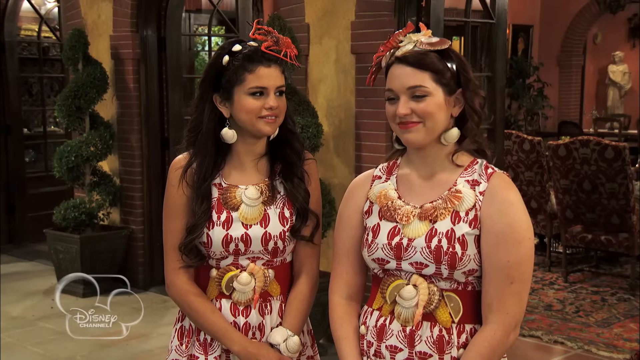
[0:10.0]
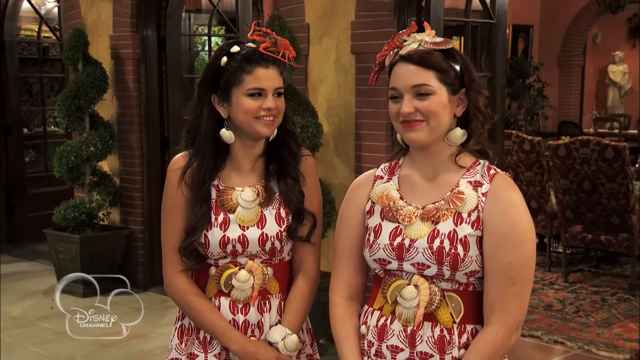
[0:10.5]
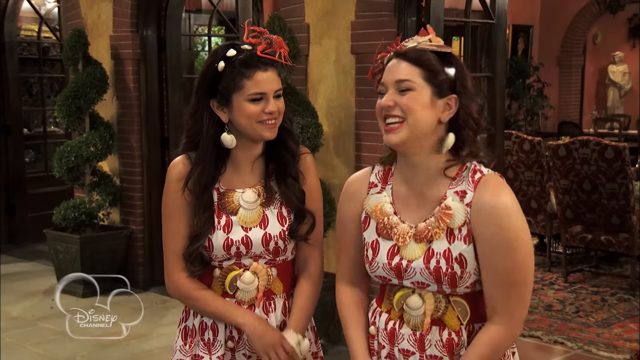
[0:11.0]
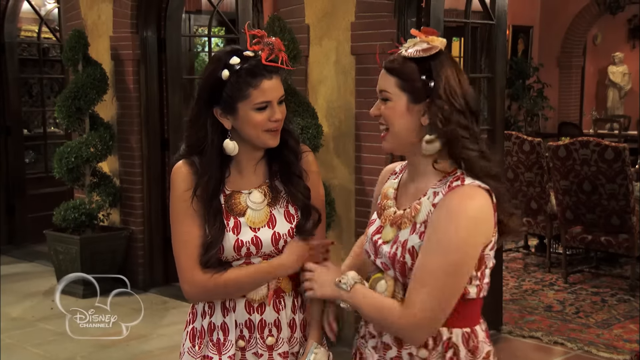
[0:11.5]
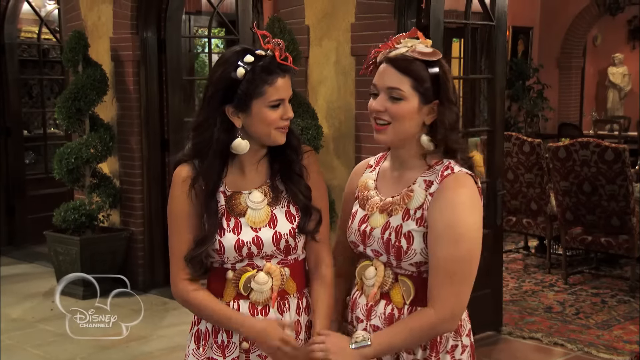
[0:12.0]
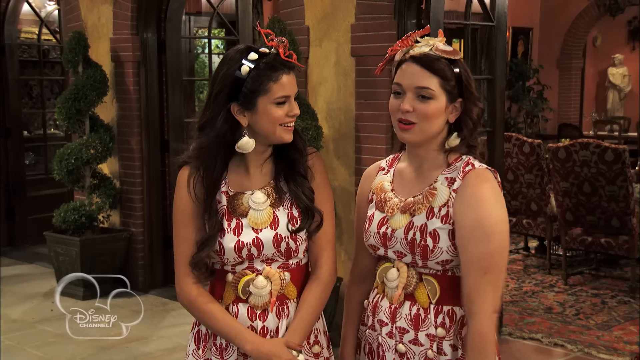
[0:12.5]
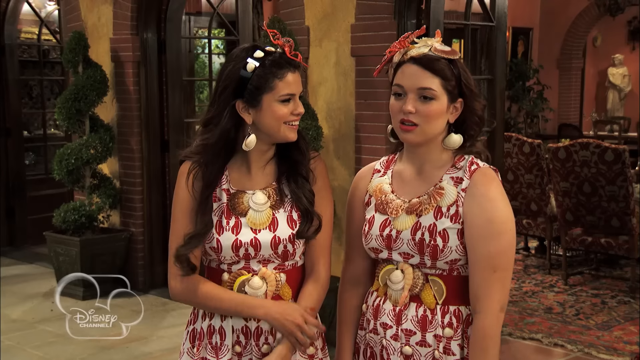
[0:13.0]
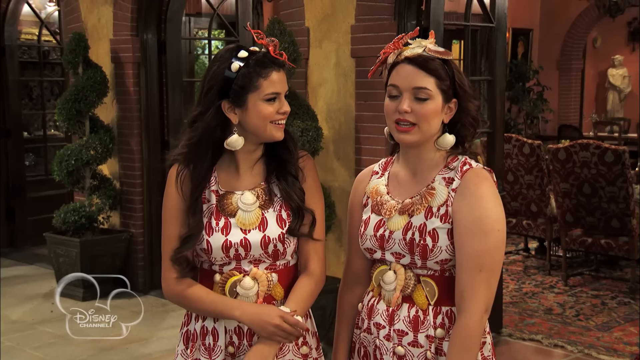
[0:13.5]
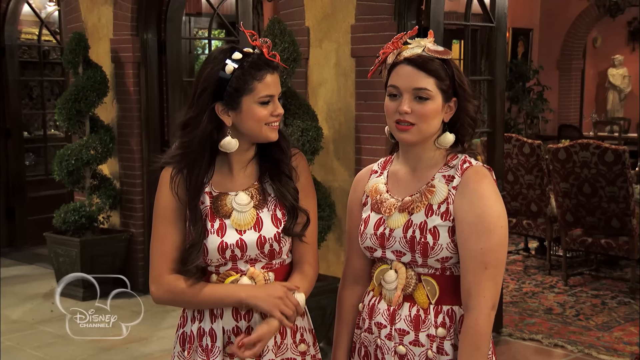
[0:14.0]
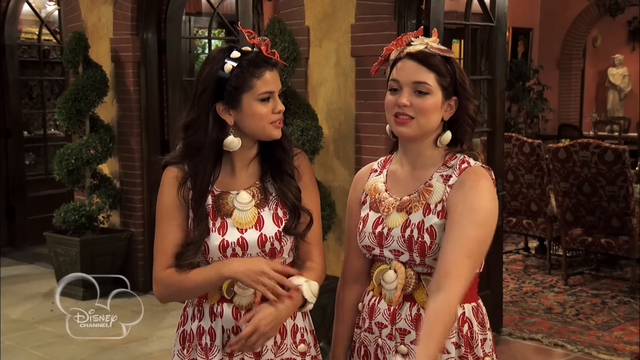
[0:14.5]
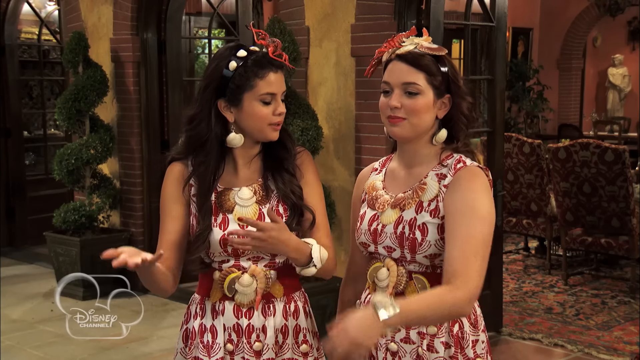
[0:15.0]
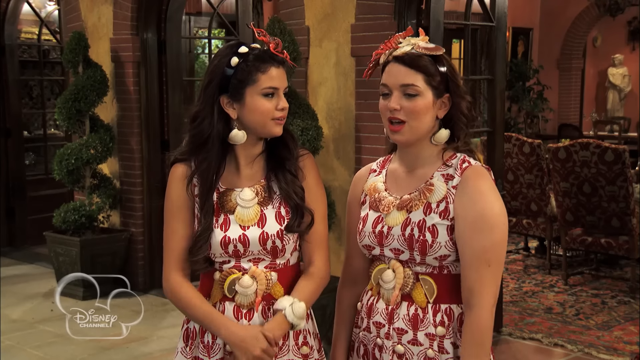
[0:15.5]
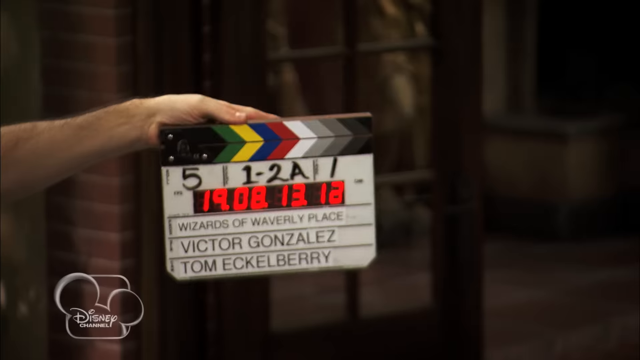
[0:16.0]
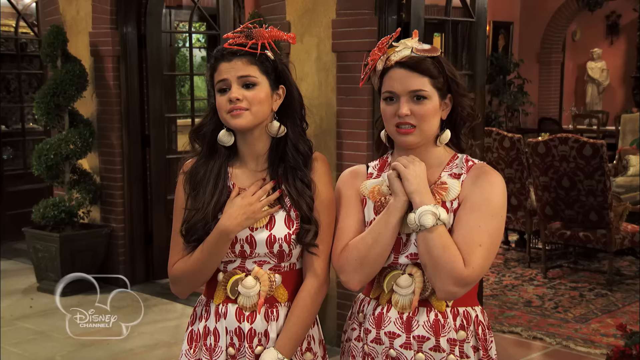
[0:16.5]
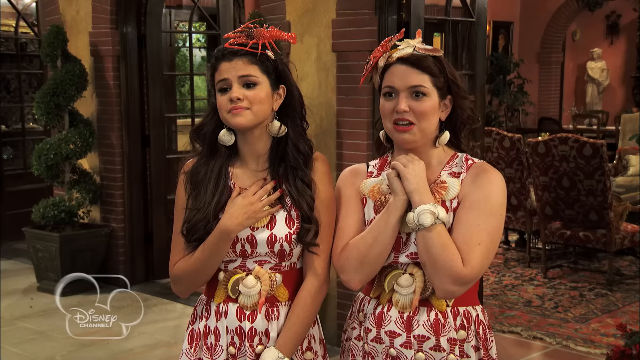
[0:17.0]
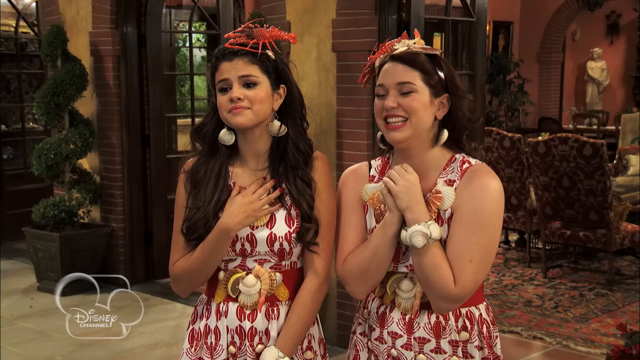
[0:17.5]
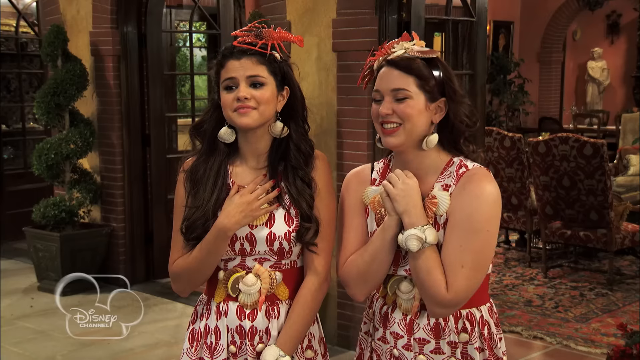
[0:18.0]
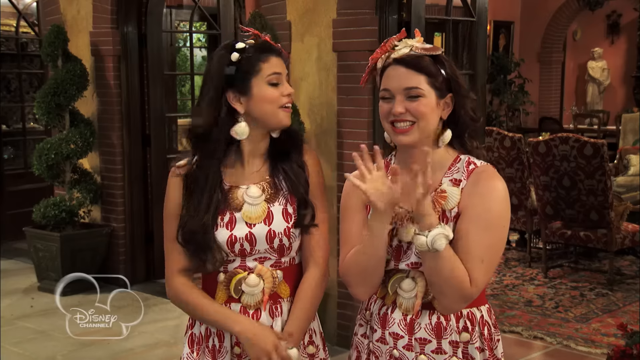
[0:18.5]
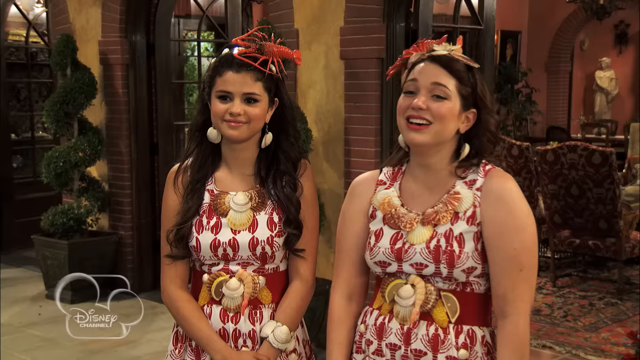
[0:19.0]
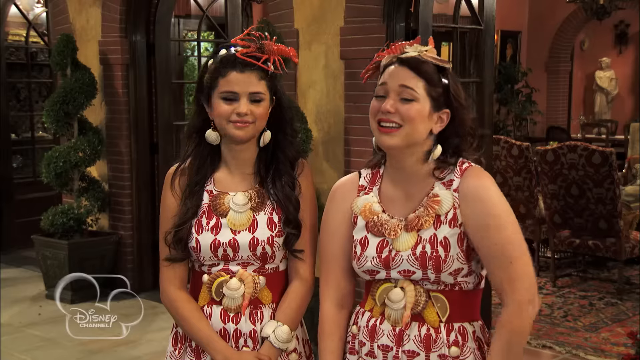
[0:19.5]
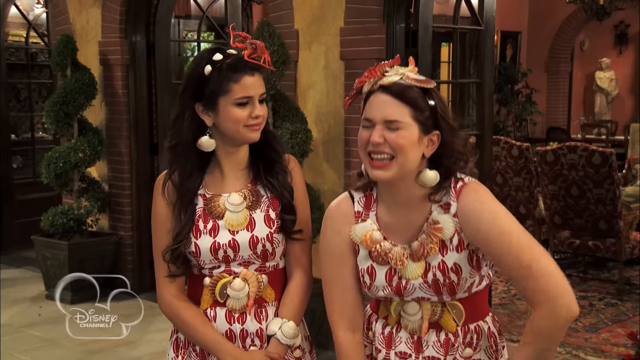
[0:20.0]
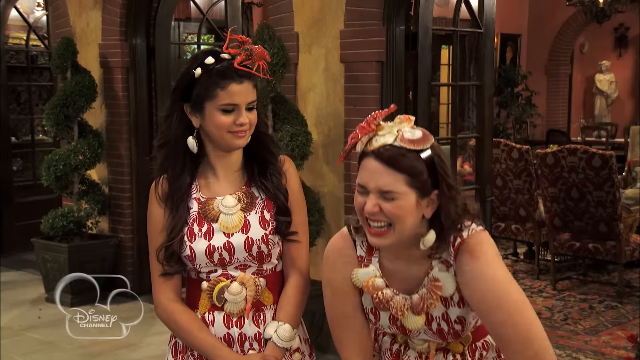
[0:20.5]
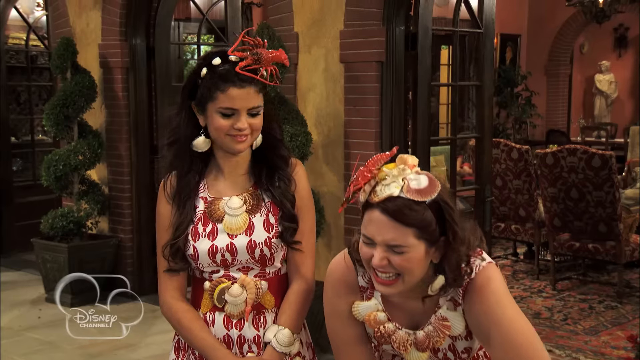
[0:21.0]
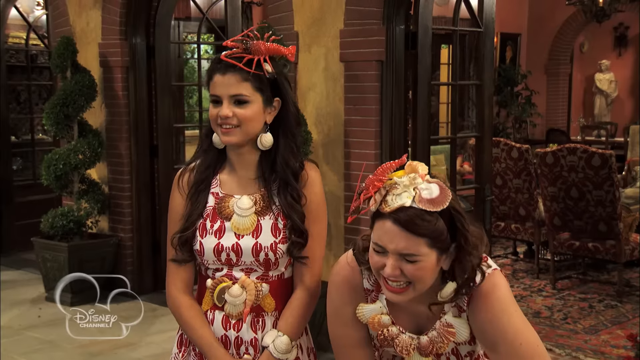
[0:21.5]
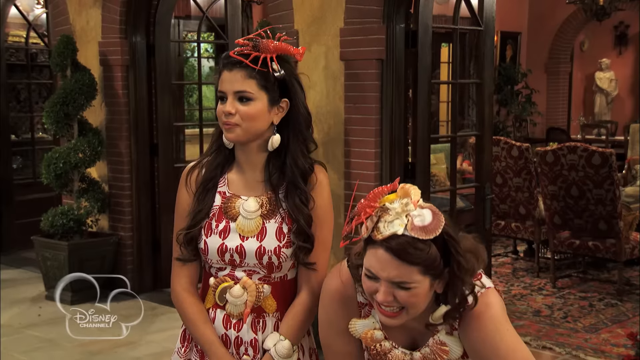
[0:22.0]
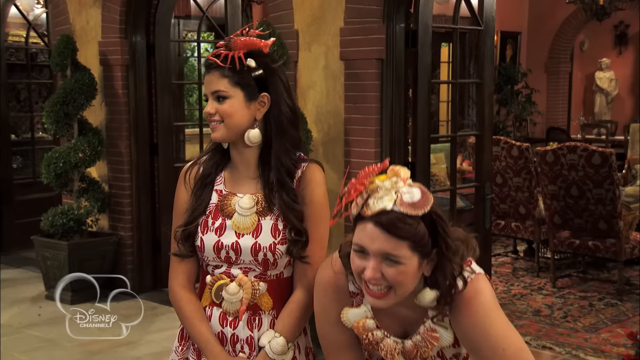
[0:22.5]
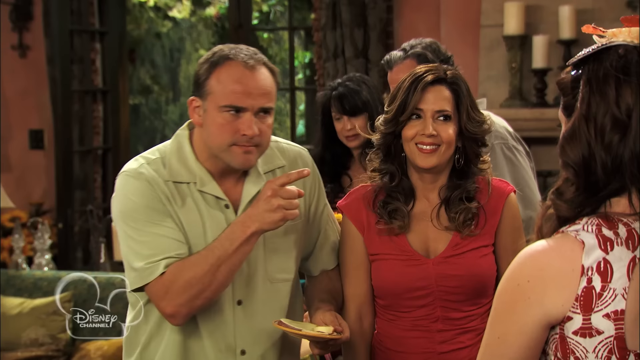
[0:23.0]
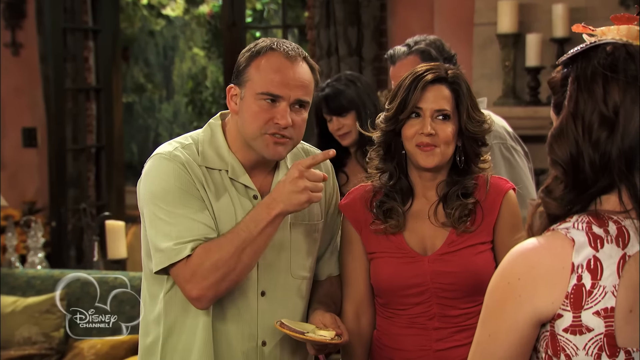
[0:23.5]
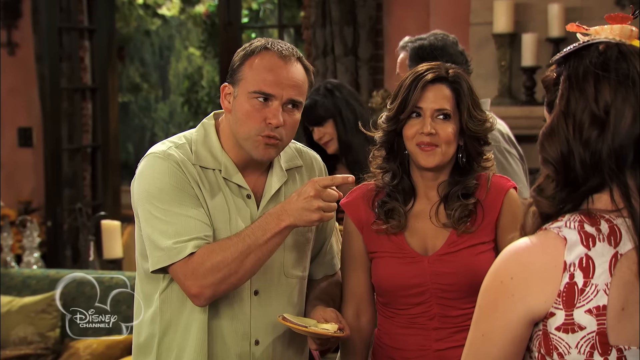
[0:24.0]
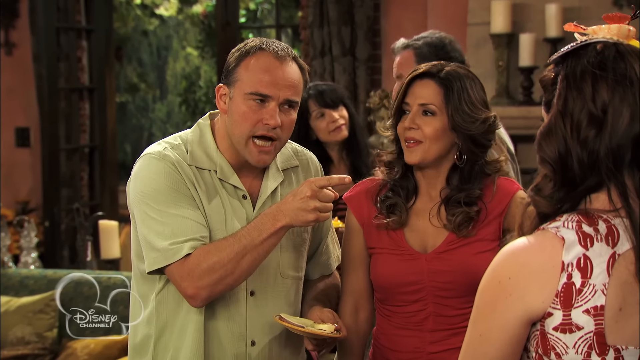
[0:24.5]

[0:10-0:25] The two characters in identical dresses are smiling and laughing. They turn towards each other and begin speaking. A quick cutaway shows someone holding the object that is pressed down to mark "action" when shooting a movie. Next, the characters have both hands on their chests, and the character on the right starts laughing. The person does the cut action again, and the shot returns to the two characters. The character on the right laughs so hard she bends over, while the character on the left is still standing upright. The camera then turns to two new characters: on the left, a man in an olive green collared polo shirt who looks middle-aged, and on the right, a woman in a red t-shirt who also looks middle-aged. Two people are in the background as well.